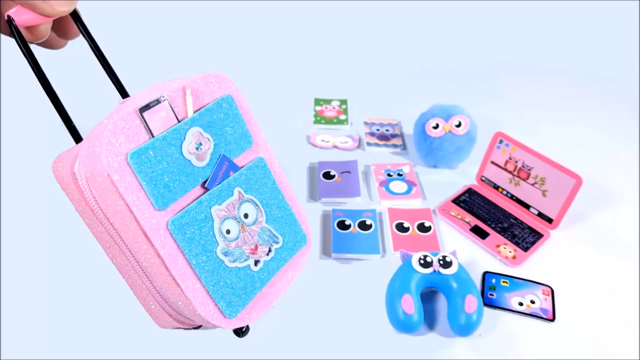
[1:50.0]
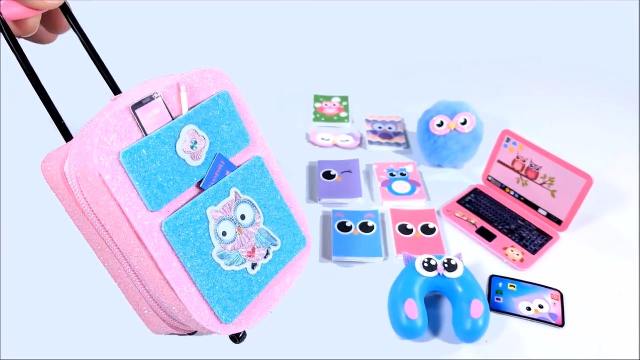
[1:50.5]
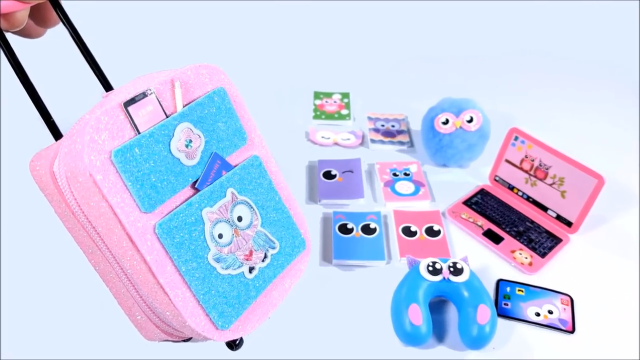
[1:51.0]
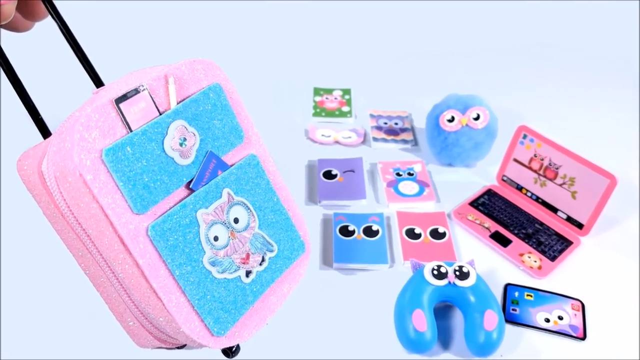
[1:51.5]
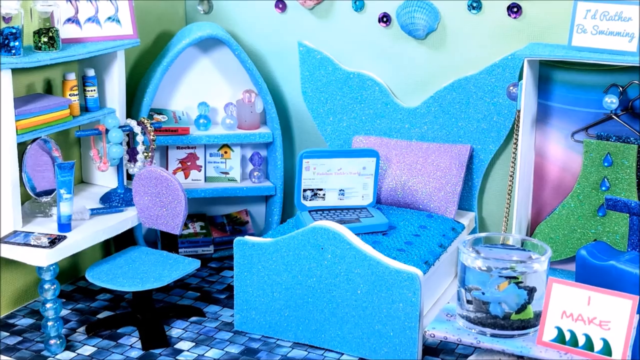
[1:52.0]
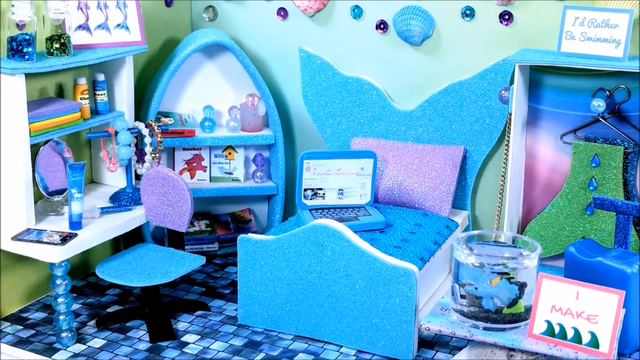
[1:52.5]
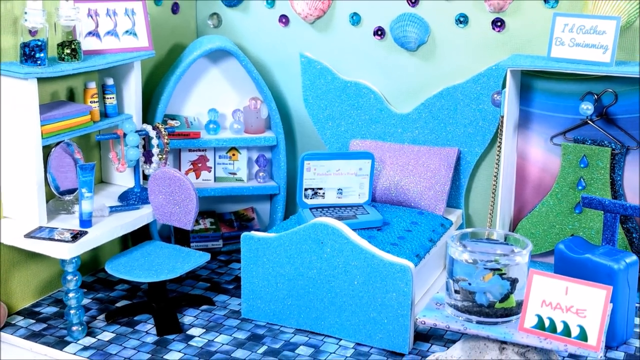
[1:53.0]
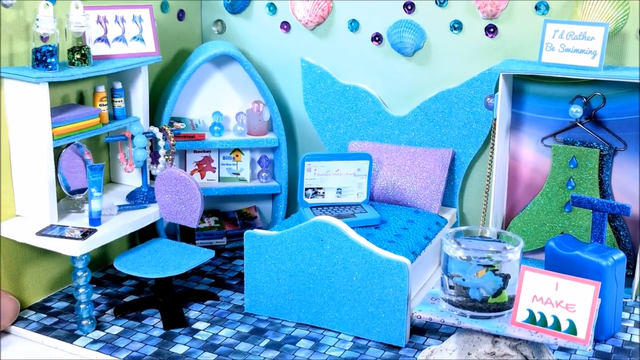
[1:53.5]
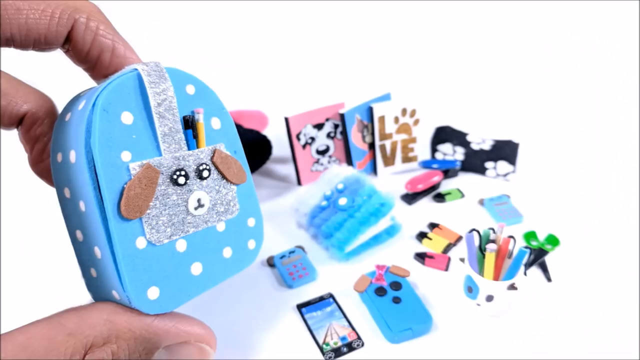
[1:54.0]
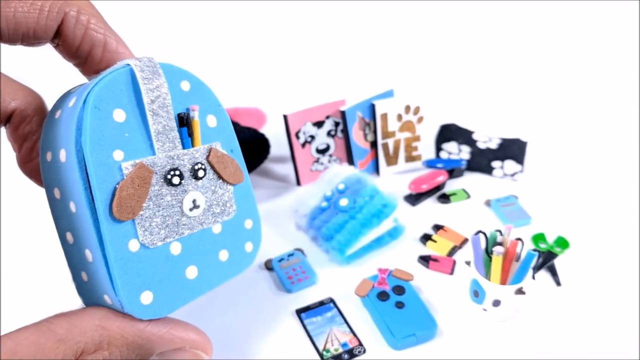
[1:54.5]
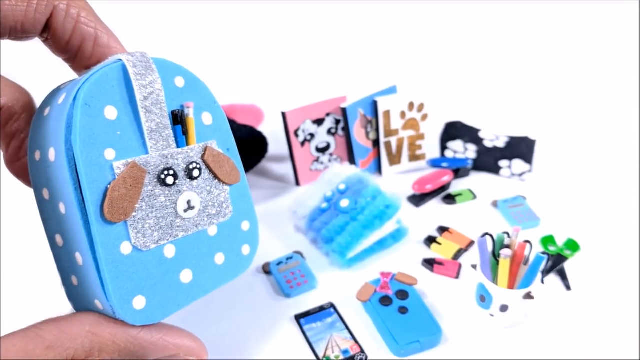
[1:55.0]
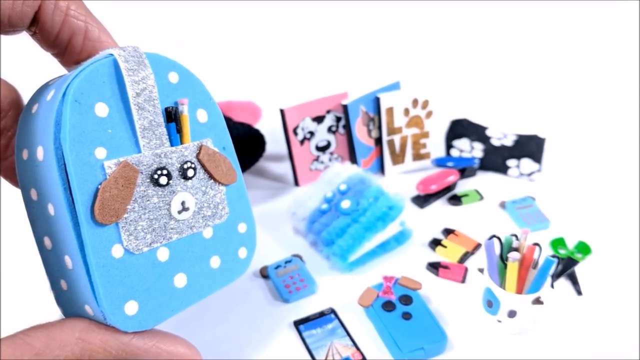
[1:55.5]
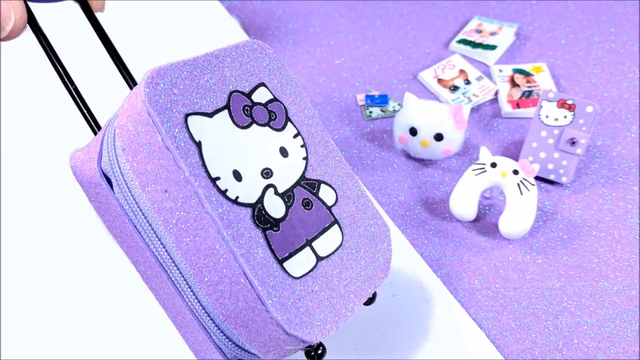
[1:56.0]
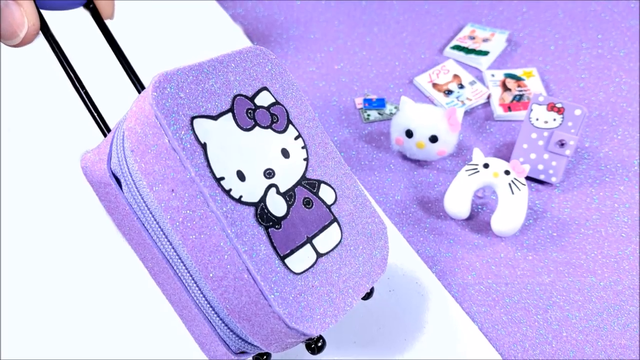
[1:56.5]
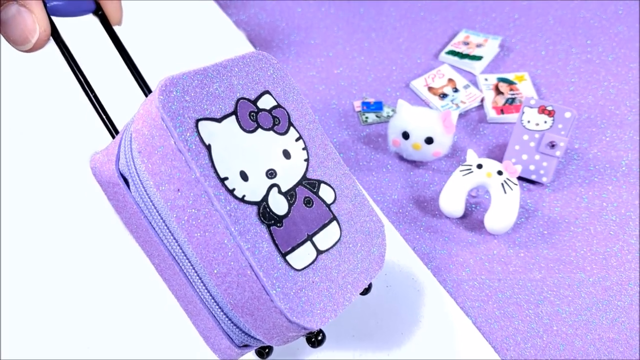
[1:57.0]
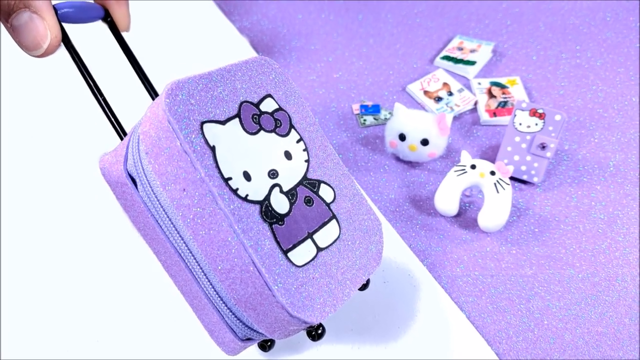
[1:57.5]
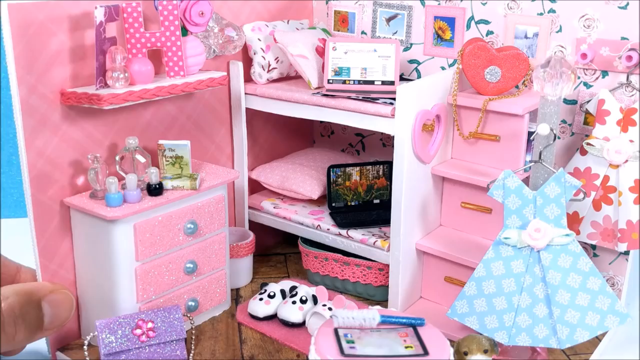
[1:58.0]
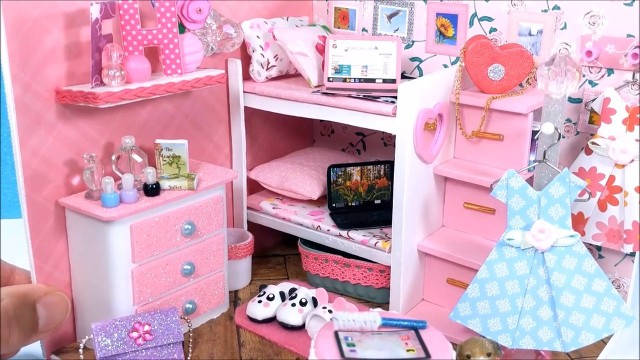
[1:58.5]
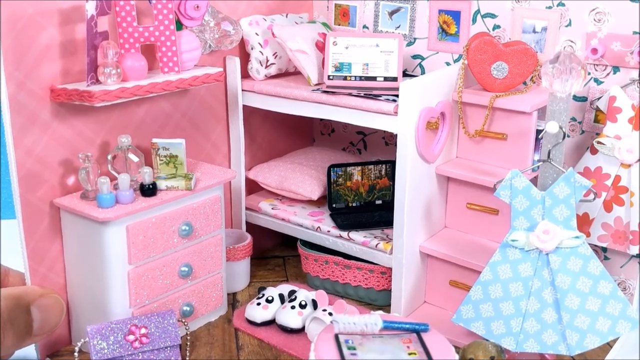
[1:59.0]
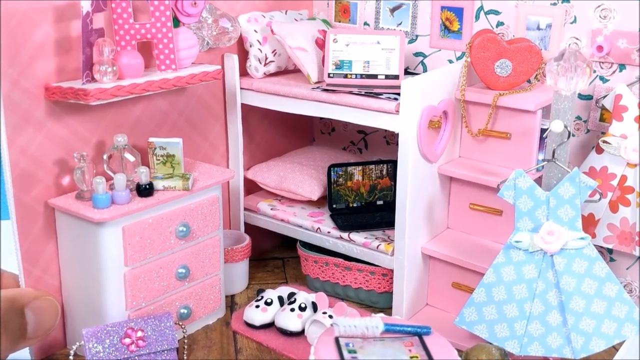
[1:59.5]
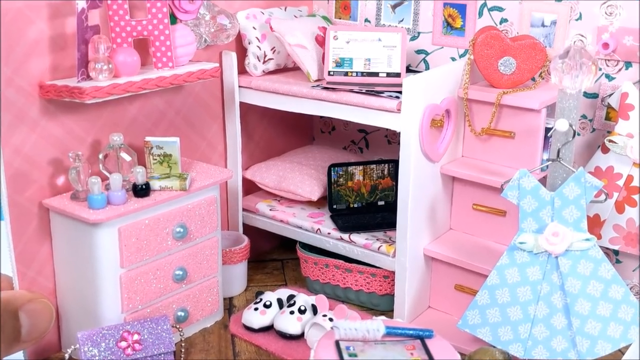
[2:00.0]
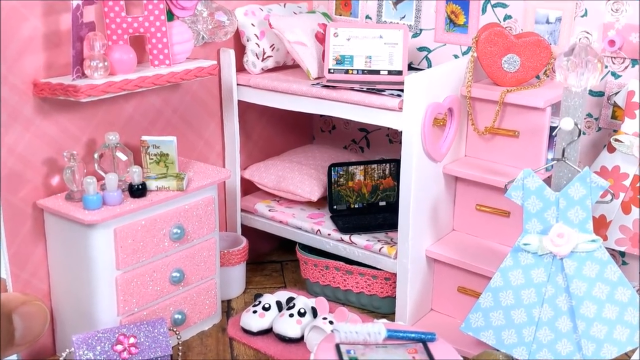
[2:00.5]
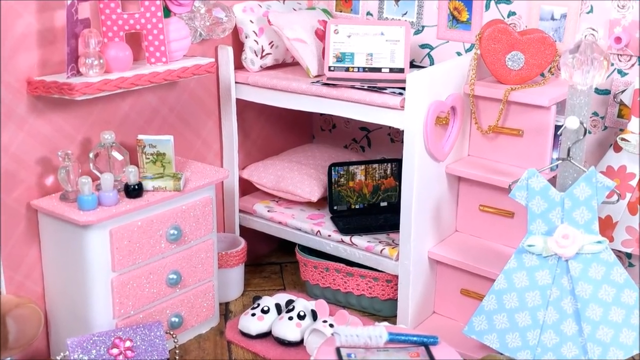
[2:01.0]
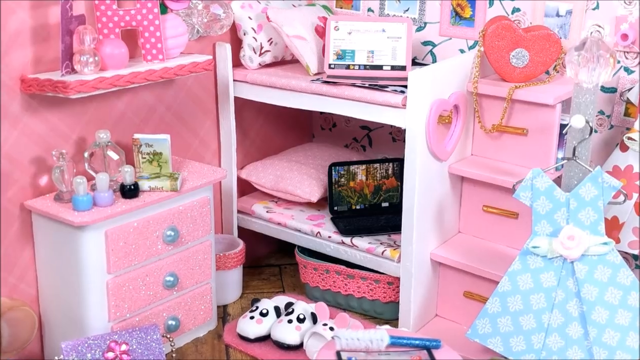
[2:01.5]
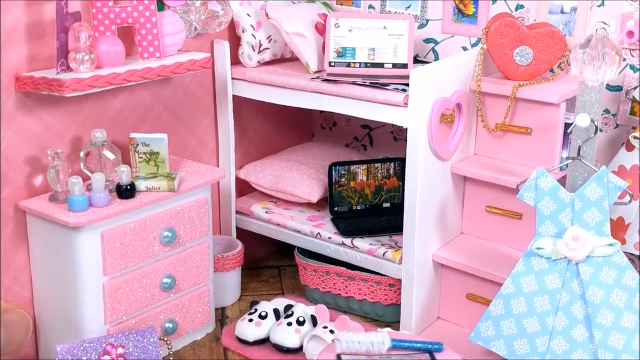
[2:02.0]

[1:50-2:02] The creator shows off accessories made for the Barbies: a suitcase, a Hello Kitty suitcase, a backpack and a whole room. Everything is very pink and purple, with some blue. The miniatures include a purse, what looks like a book bag or books, a phone, a laptop and a PlayStation or Xbox controller, and googly eyes and paint are used. There are several different rooms: some look like bedrooms, some look like a dorm room, and some look very messy. There is even a fish tank with a fake fish or goldfish in it.